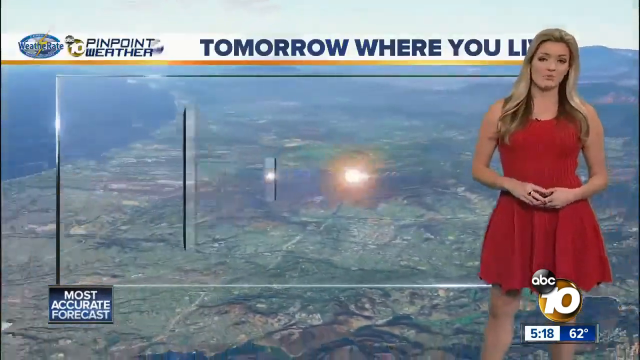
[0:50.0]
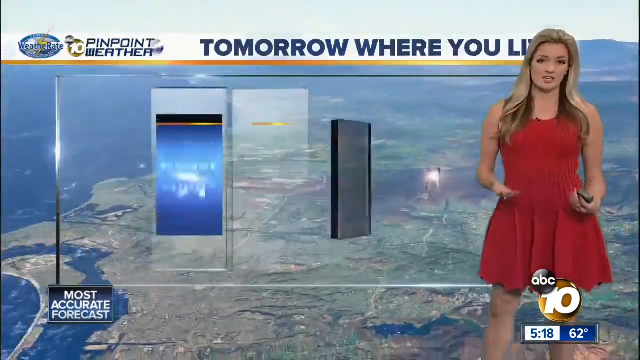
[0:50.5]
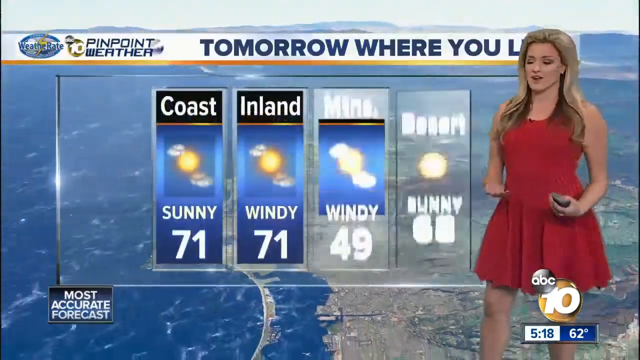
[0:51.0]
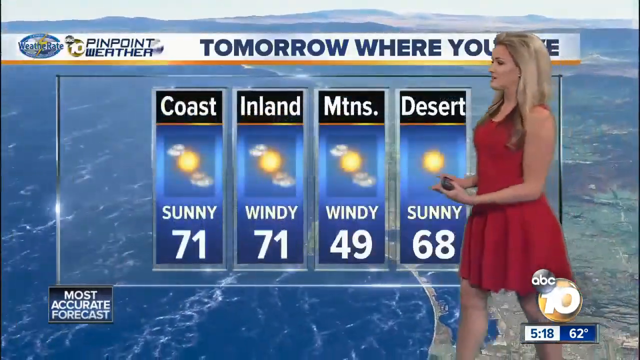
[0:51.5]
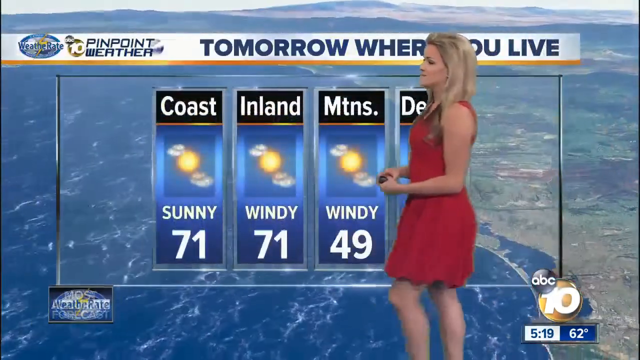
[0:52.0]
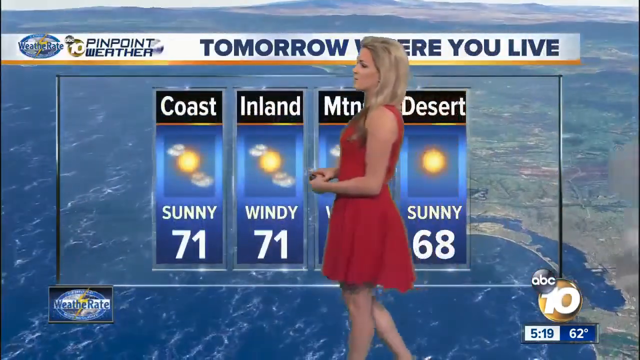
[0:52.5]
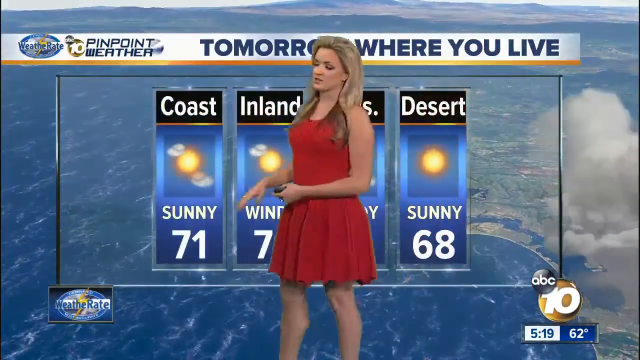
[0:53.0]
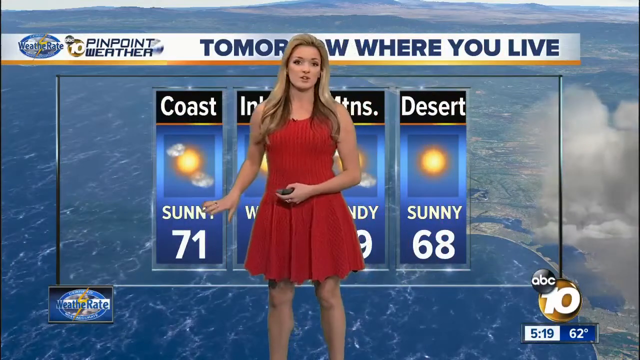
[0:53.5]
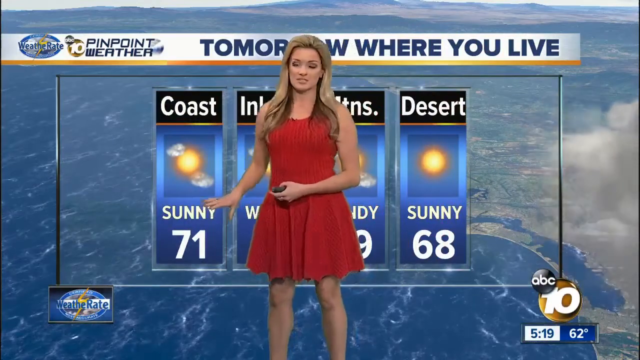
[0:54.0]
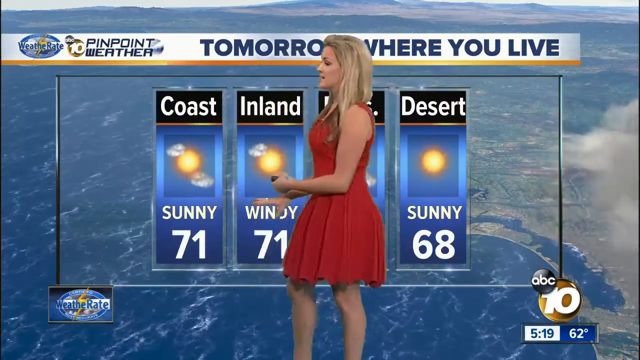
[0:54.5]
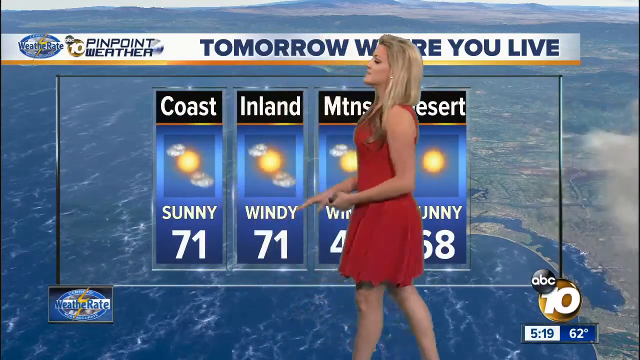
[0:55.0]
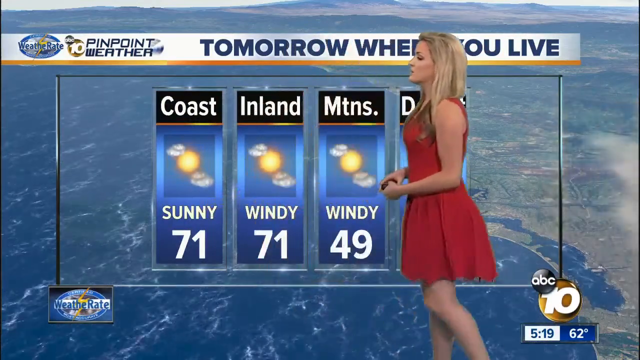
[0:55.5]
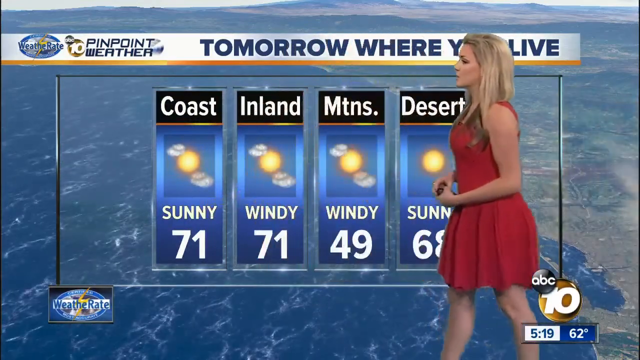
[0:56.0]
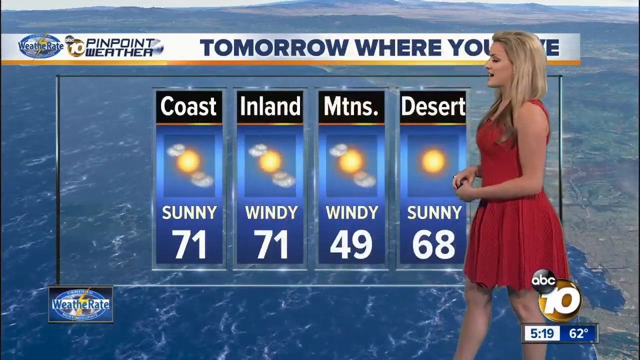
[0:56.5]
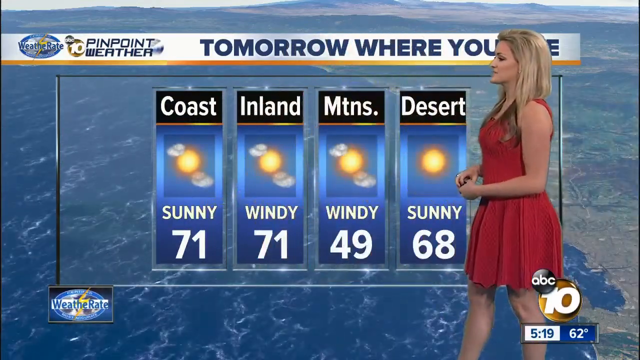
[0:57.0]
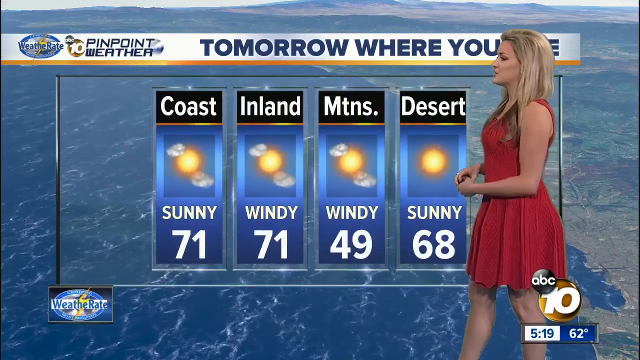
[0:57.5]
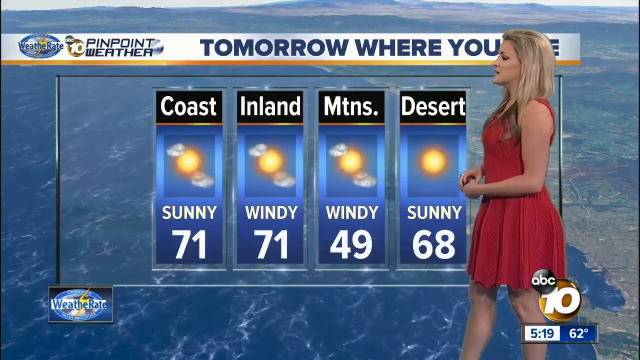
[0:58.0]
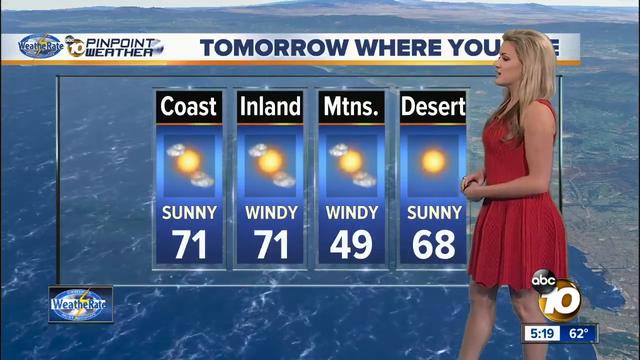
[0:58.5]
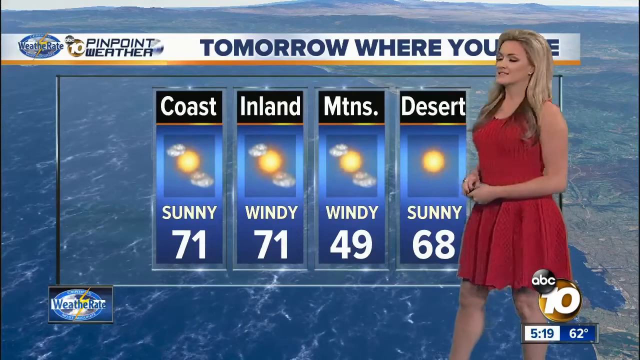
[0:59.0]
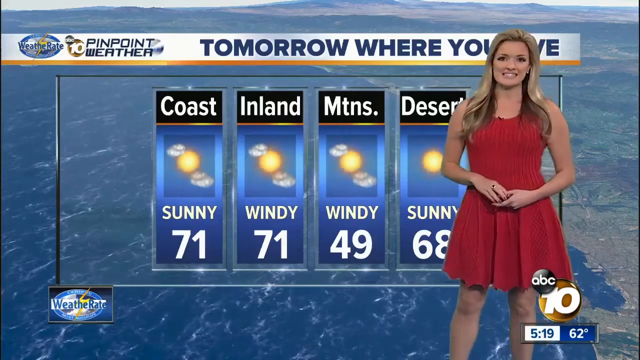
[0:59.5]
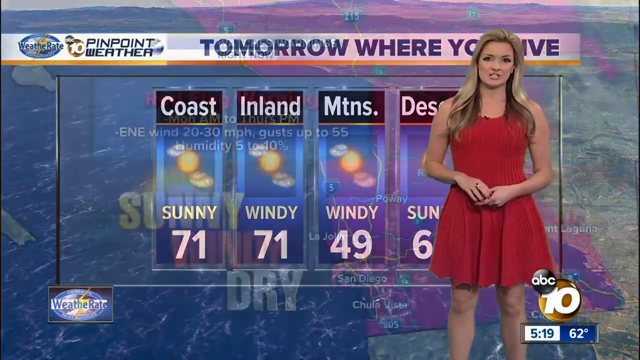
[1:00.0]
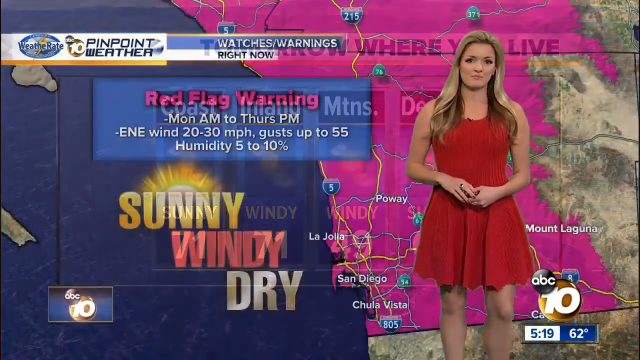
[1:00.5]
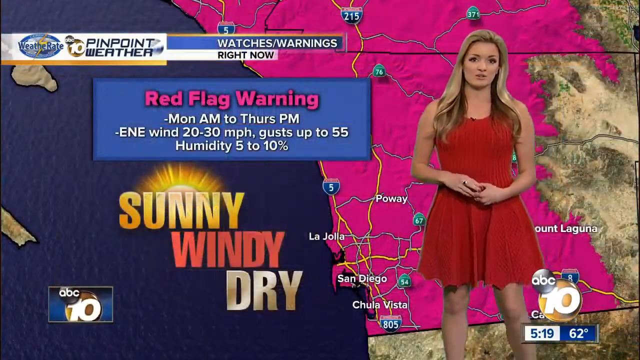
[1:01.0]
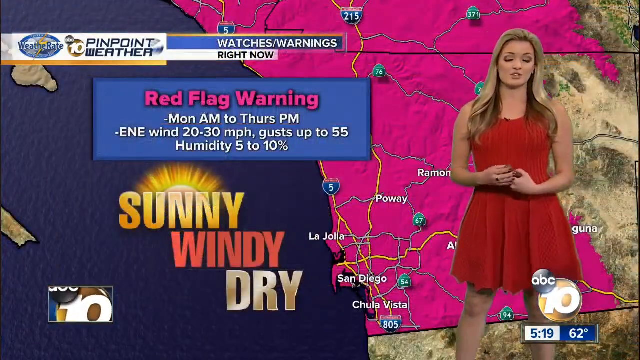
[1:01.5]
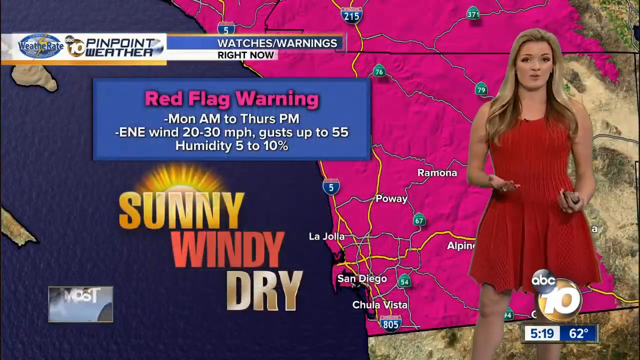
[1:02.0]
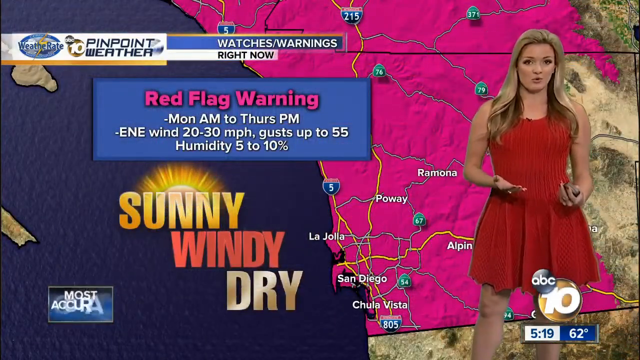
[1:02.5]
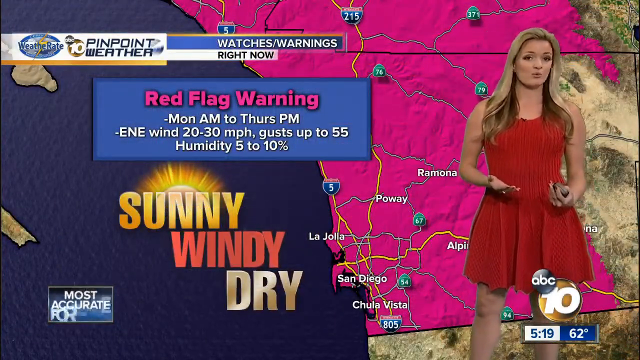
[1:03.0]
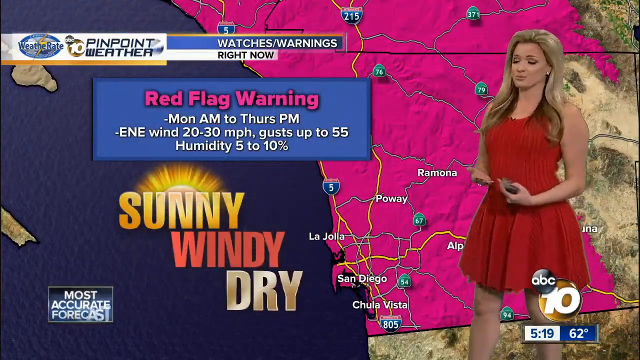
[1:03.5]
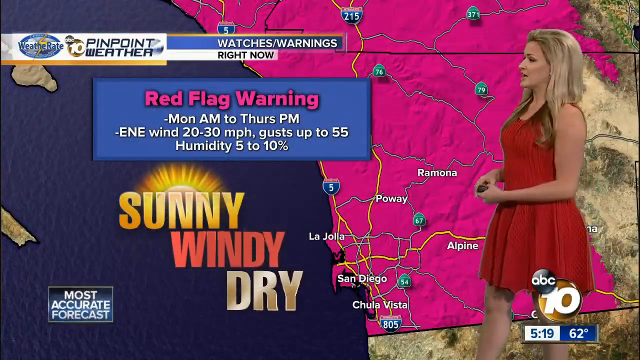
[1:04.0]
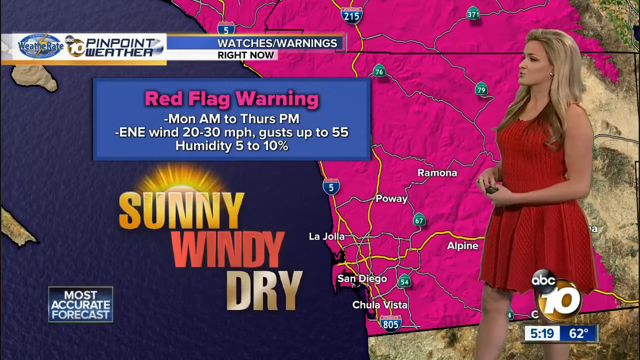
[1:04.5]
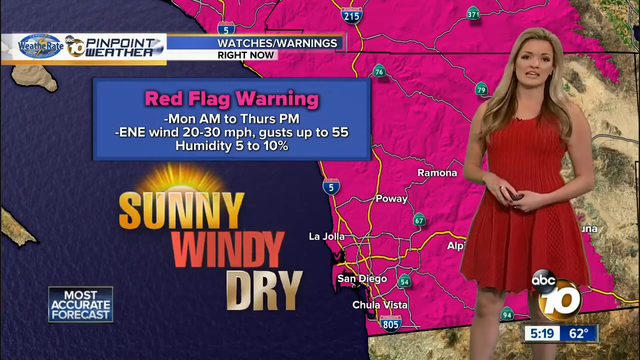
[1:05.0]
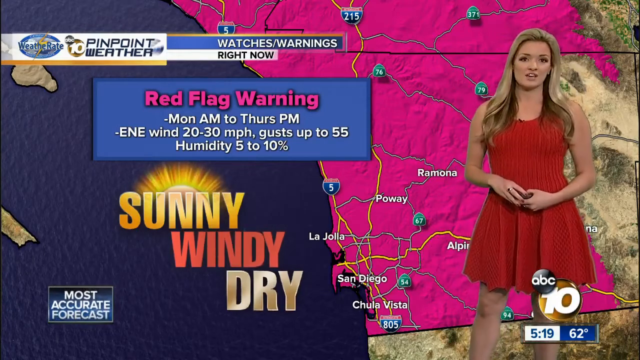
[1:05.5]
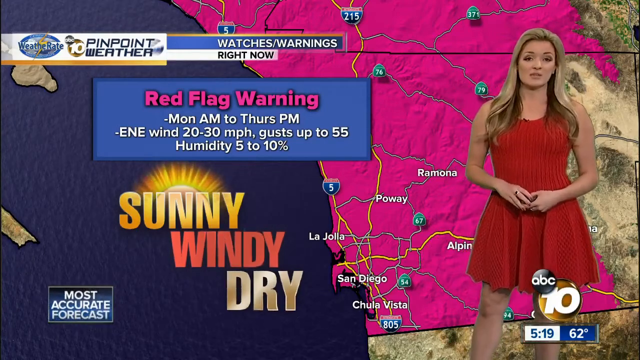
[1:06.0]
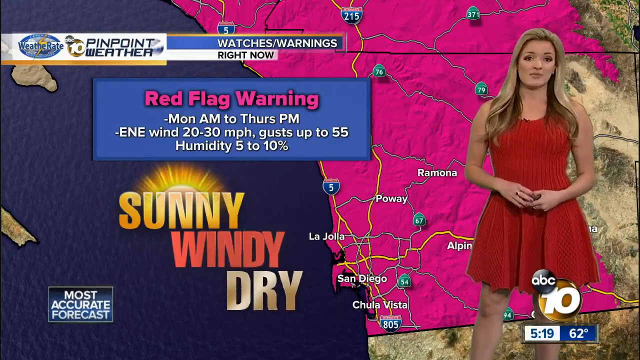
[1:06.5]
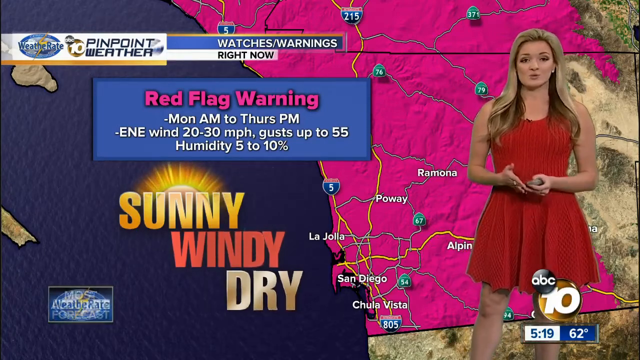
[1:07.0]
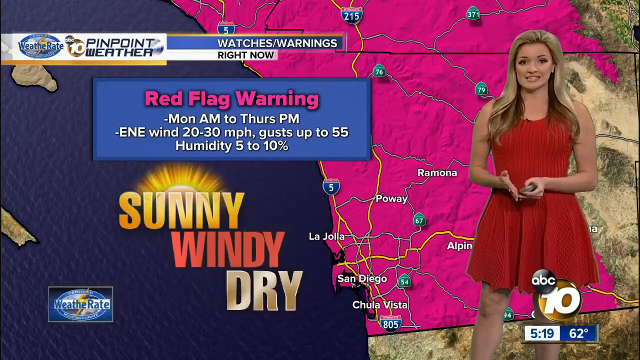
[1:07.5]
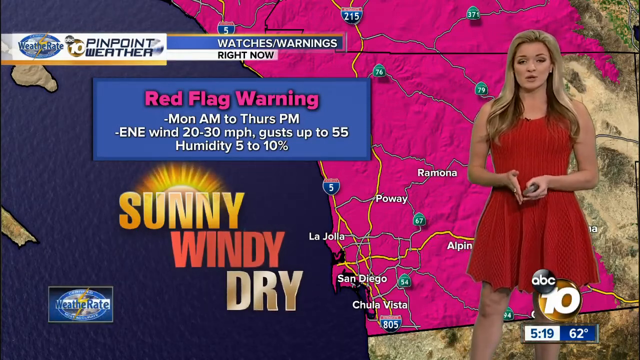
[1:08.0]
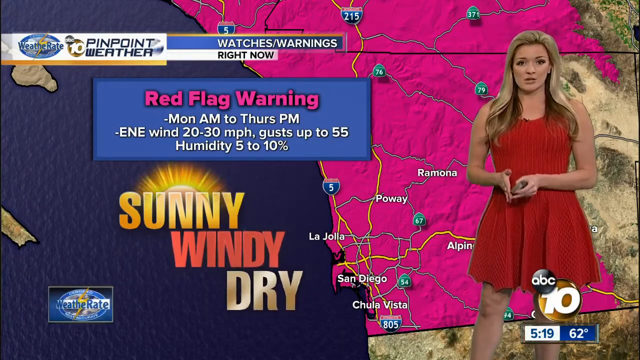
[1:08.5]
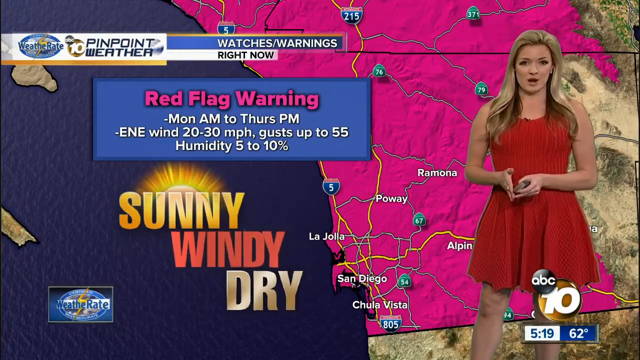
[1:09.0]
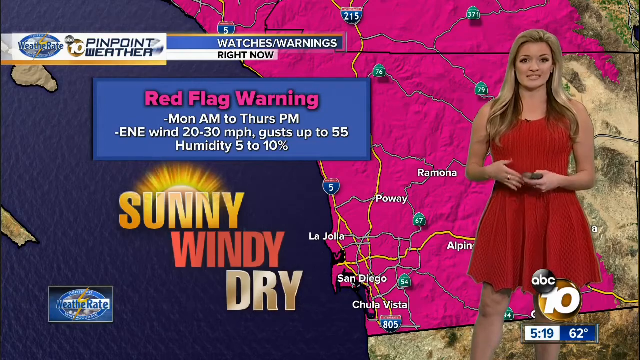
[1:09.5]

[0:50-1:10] The weather woman walks from the right toward the center and then backward, mostly facing left toward the off-camera teleprompter and occasionally turning to the front to talk to the viewer. The background graphic changes to an aerial view of the city or a mountainous area, titled "Tomorrow Where You Live," and the view pans to the left until it is over the ocean, with some clouds on the right. Four columns then appear, titled "Coast," "Inland," "Mountains" and "Desert" in white text on black. Beneath them, the first three show sun and clouds and the fourth shows full sun, all on blue backgrounds, with white text reading "sunny," "windy," "windy," "sunny," and large numbers 71, 71, 49 and 68, also on blue. The graphic switches to a very bright pink map behind her showing street or freeway lines and white labels for cities in the San Diego area. To the left of the map, the words "sunny," "windy" and "dry" are in all caps and staggered, each slightly indented: sunny in yellow with a sun rising behind it, windy in orange, and dry in a light tan or gray. A banner at the top reads "watches warnings," and beneath it, above "sunny," a blue text box reads "red flag warning" in red, with white text giving details of when the warning takes place and the expected wind gusts.